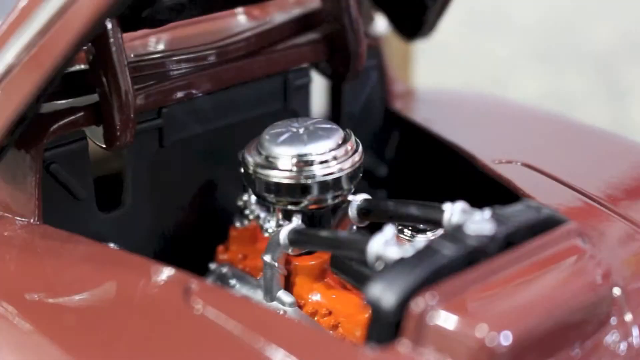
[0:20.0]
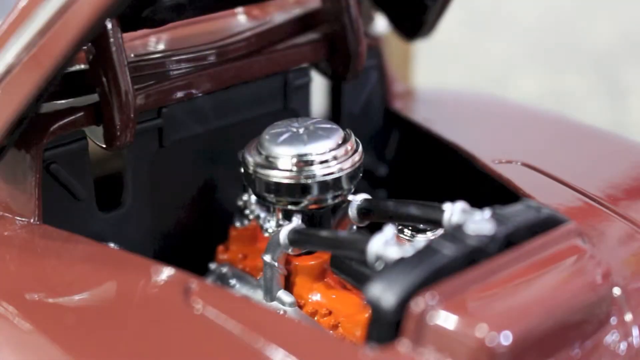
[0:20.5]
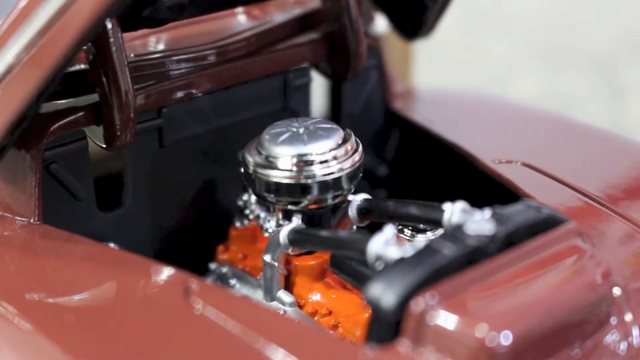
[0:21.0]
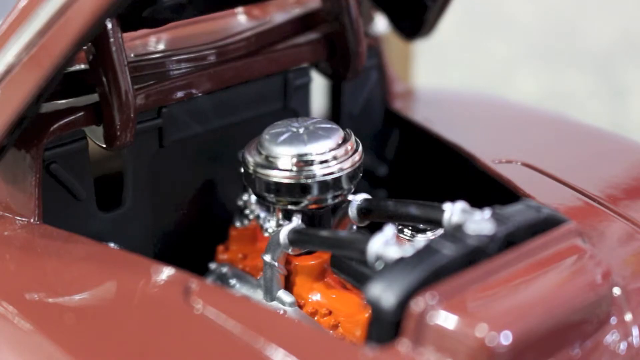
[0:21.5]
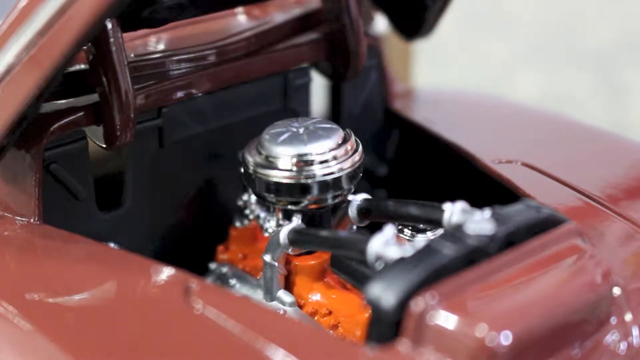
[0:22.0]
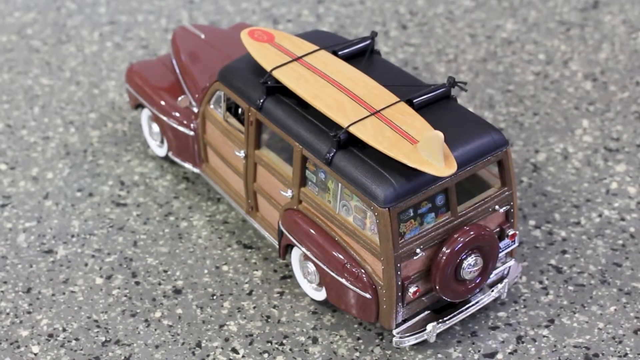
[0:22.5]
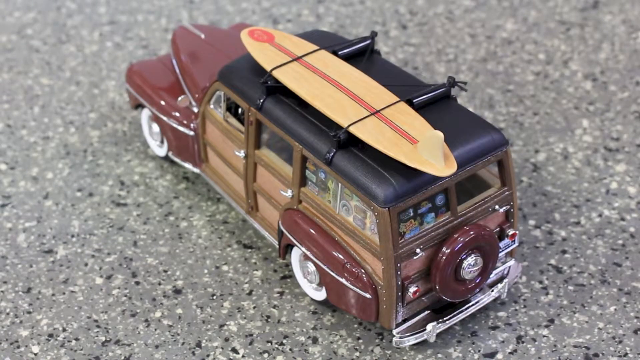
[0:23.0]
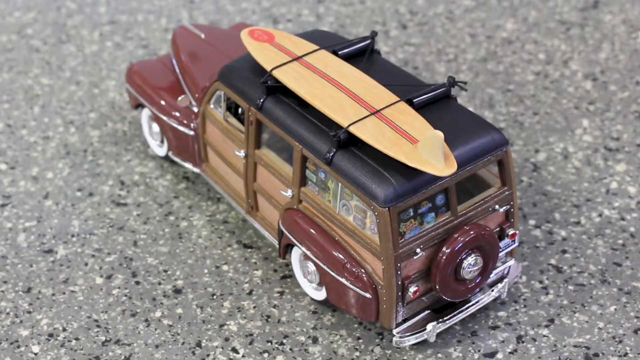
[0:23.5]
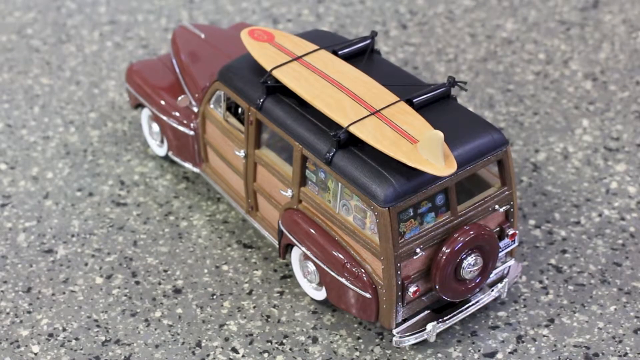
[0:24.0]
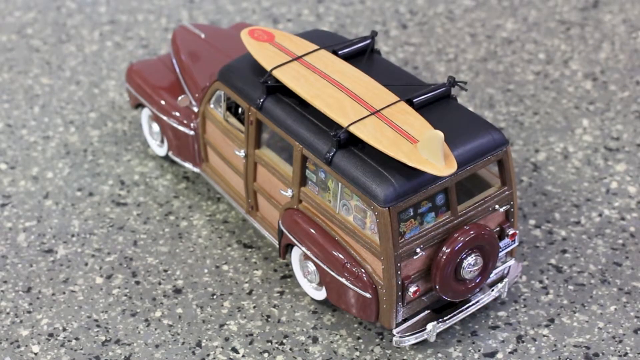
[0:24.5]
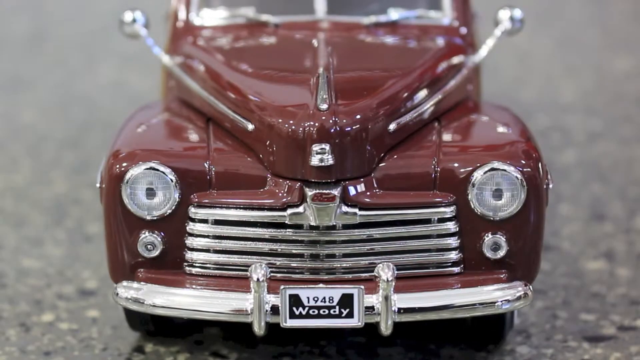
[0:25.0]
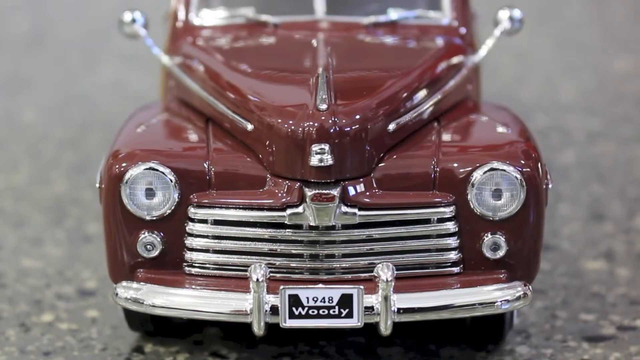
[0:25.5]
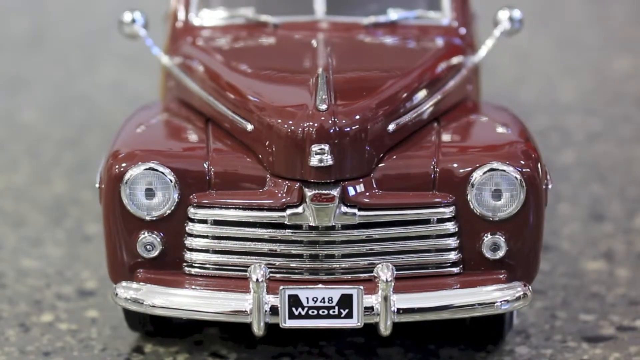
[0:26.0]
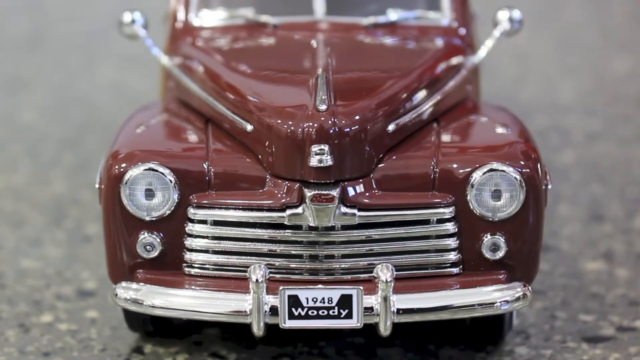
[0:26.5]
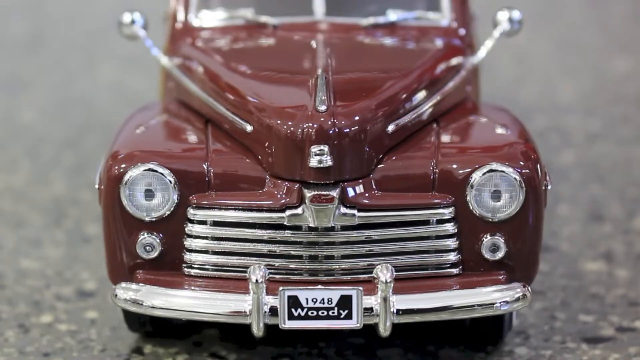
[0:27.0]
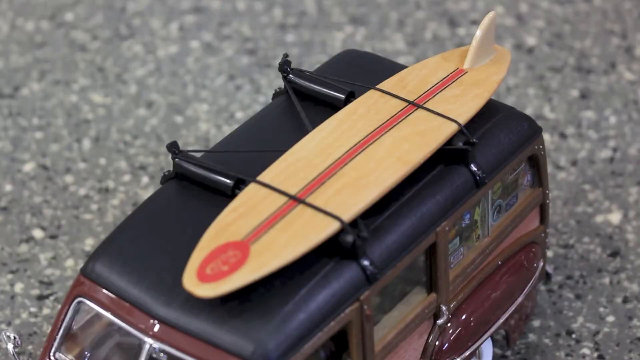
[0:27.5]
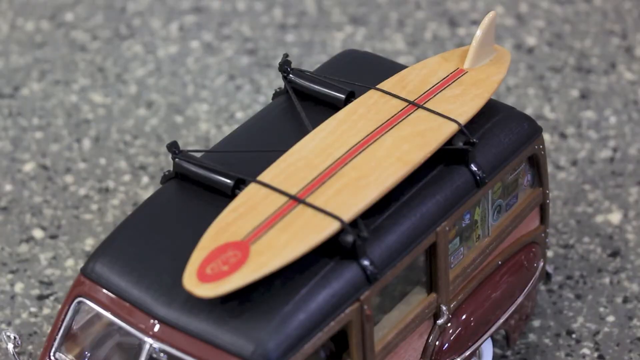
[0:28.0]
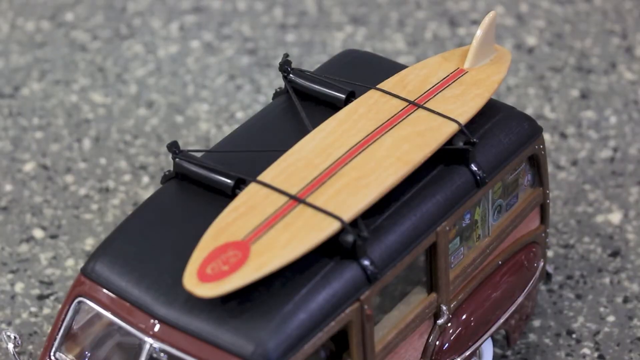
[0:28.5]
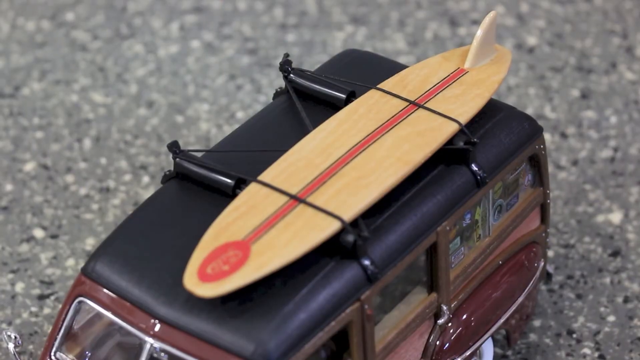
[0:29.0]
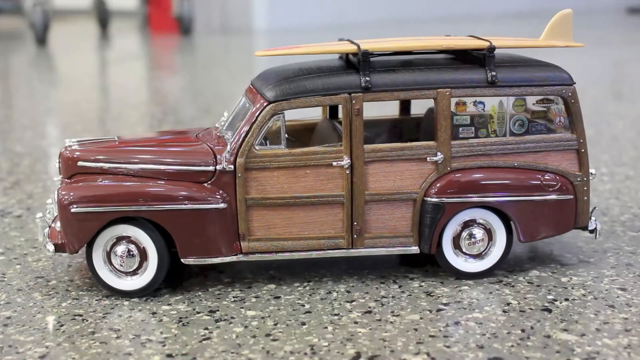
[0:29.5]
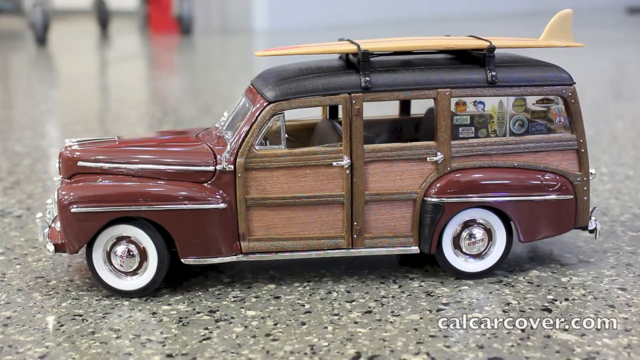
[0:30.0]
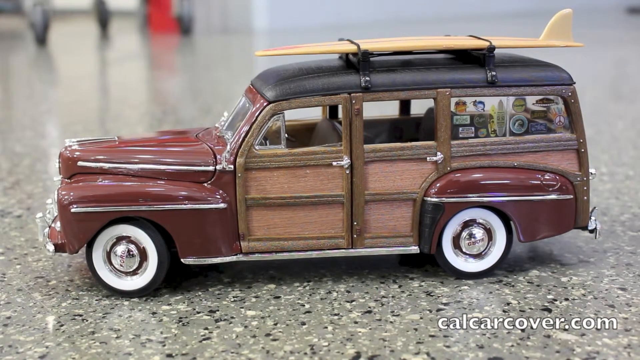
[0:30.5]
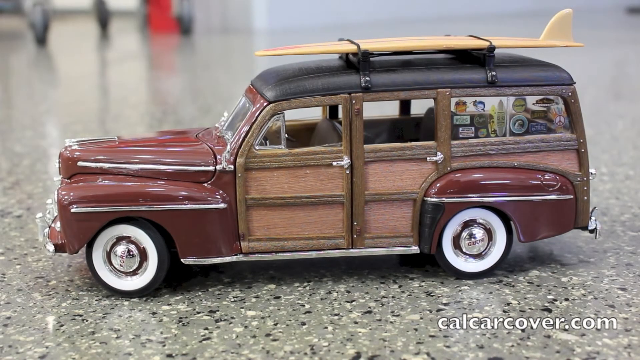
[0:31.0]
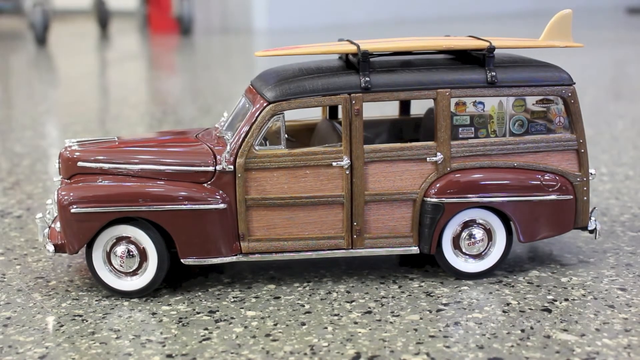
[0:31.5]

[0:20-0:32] The maroon toy car has its engine exposed, and a zoomed-in image of the engine follows. Next comes a top view of the maroon car with a yellow surfboard tied to its roof. The car has wooden doors and is showcased on marbled flooring. Then the front of the car is shown, with the number plate bearing the words Woody and the number 1948. The car has a very glossy finish and looks to be very clean. Next is a top view of the surfboard tied to the top of the car's roof; the roof is black.